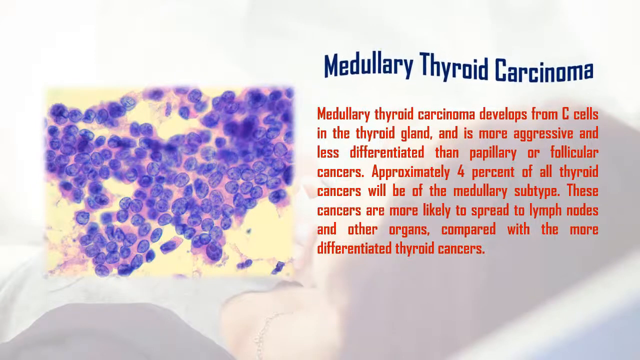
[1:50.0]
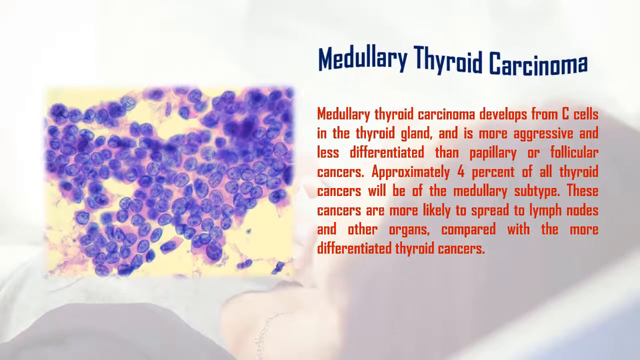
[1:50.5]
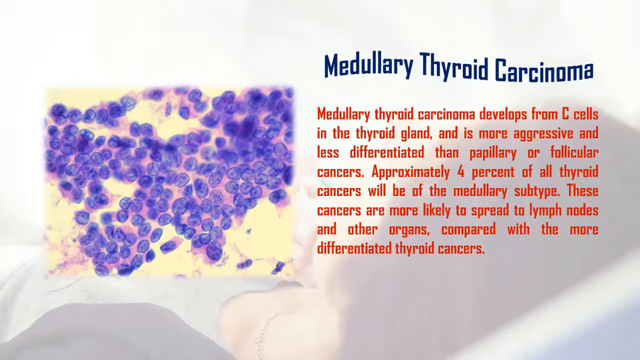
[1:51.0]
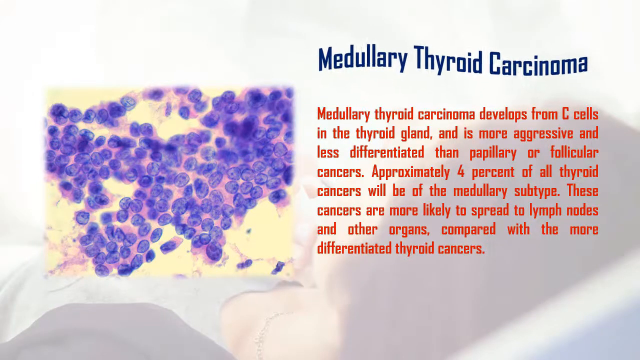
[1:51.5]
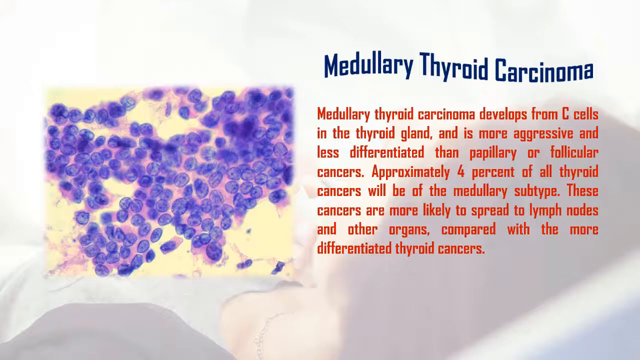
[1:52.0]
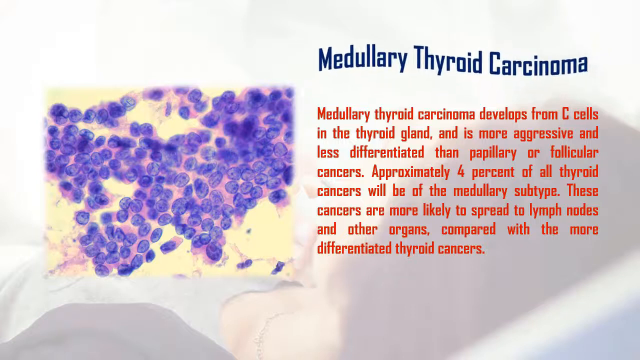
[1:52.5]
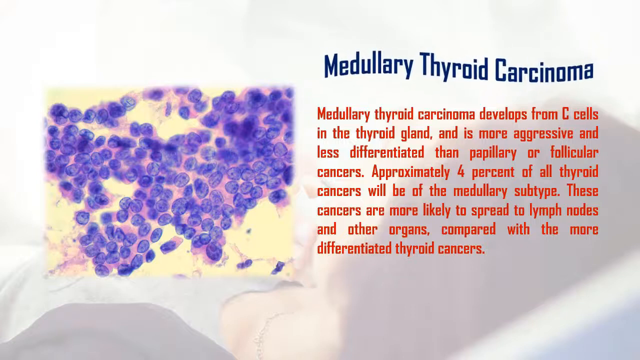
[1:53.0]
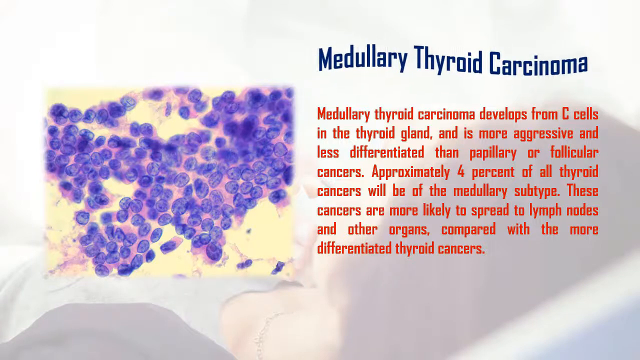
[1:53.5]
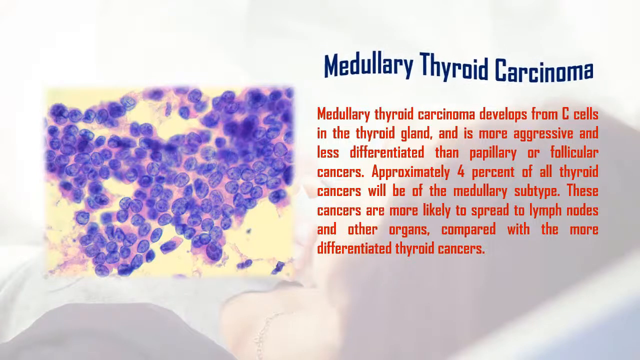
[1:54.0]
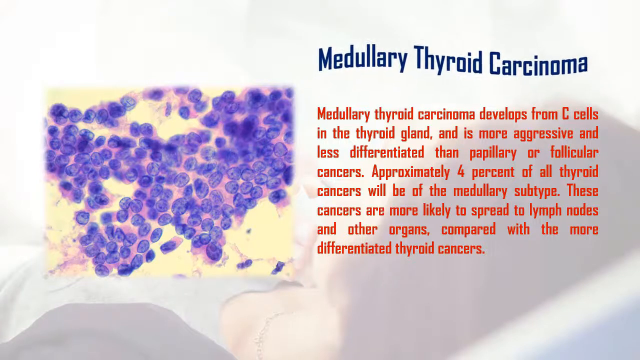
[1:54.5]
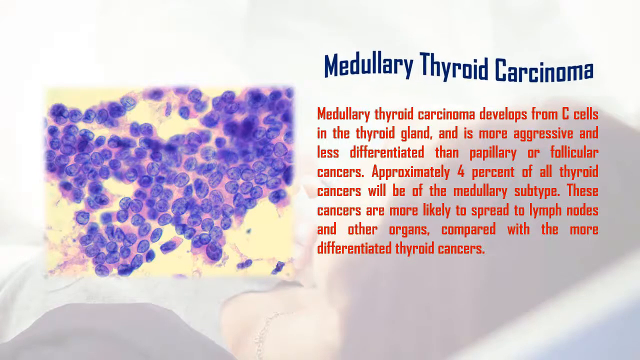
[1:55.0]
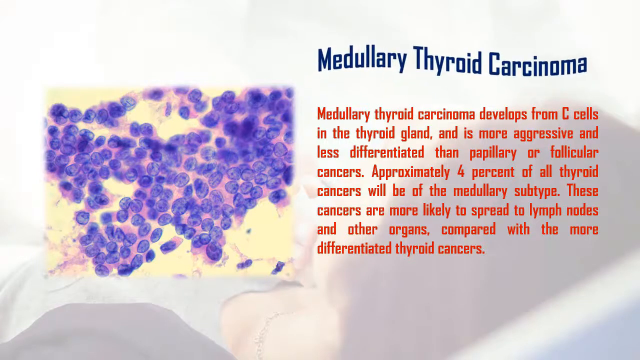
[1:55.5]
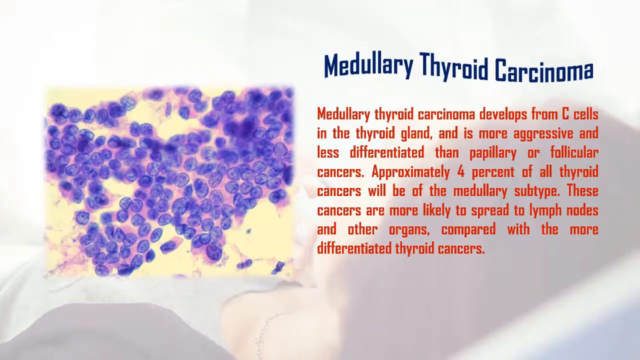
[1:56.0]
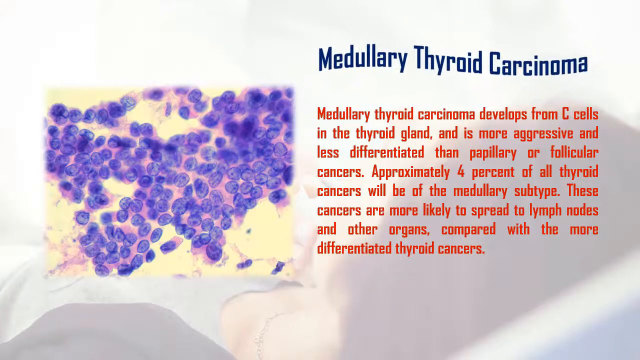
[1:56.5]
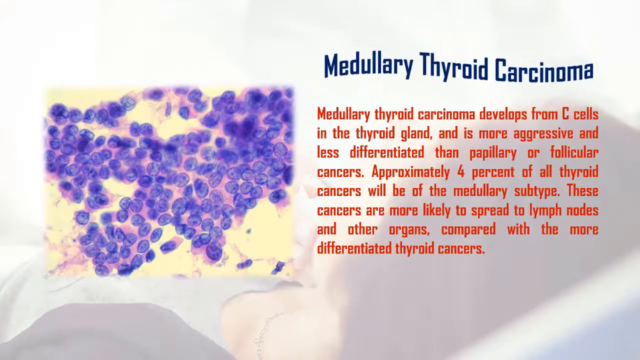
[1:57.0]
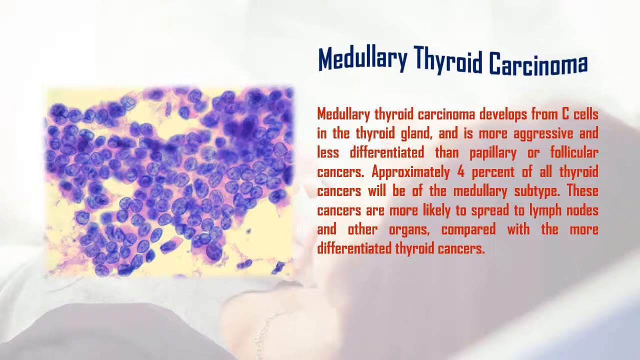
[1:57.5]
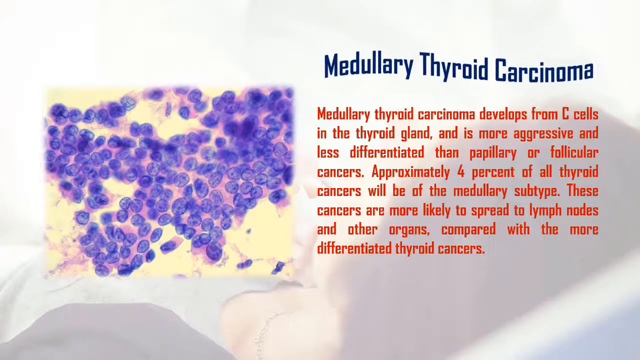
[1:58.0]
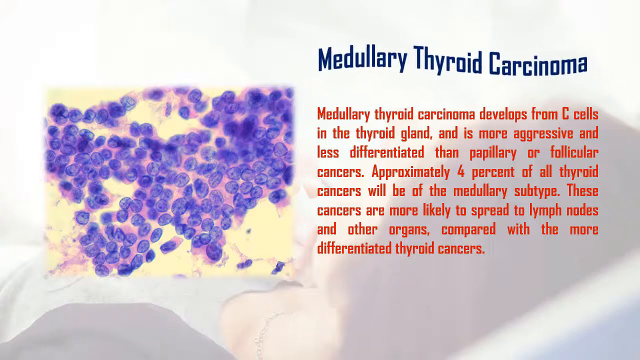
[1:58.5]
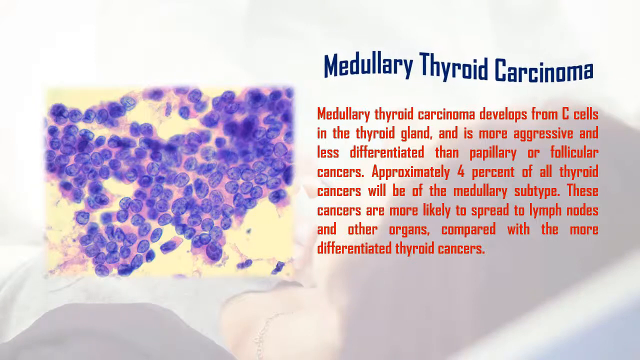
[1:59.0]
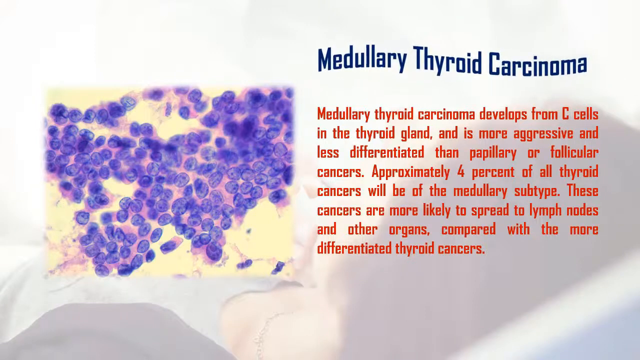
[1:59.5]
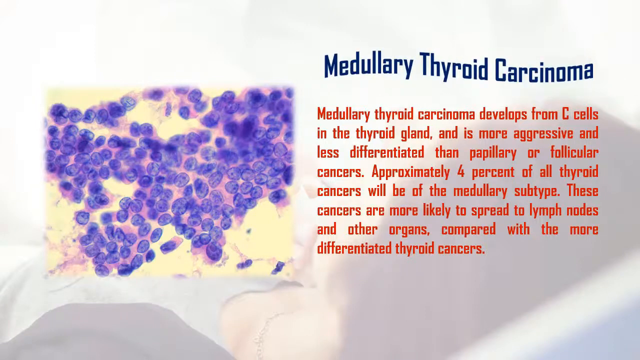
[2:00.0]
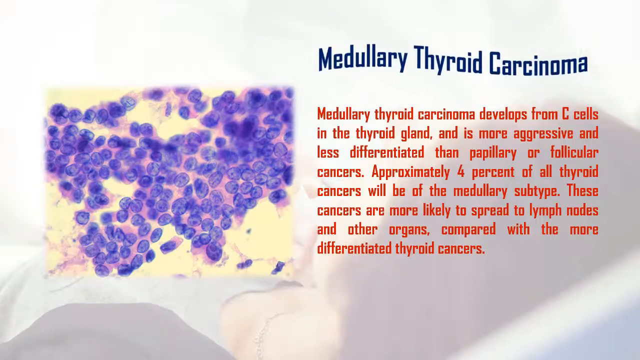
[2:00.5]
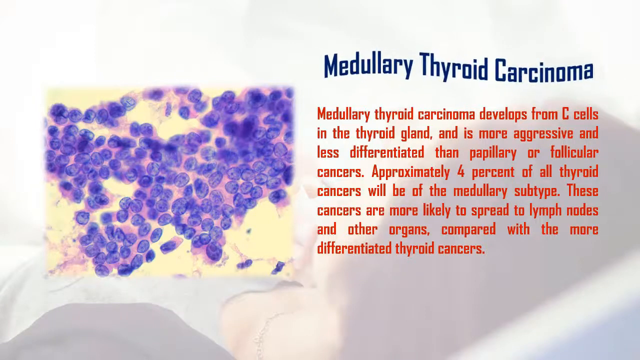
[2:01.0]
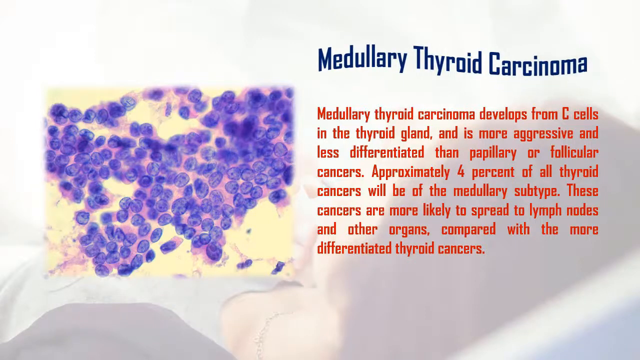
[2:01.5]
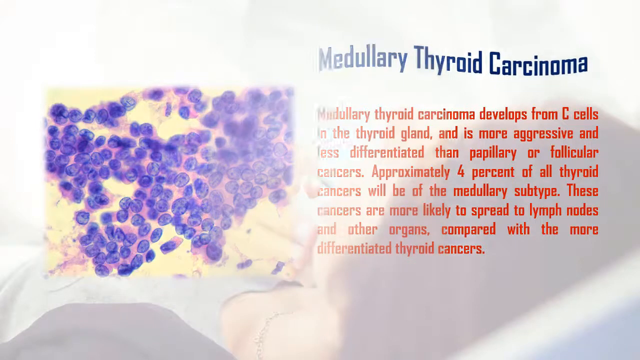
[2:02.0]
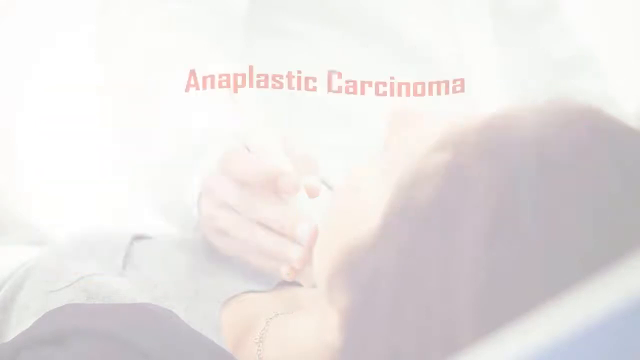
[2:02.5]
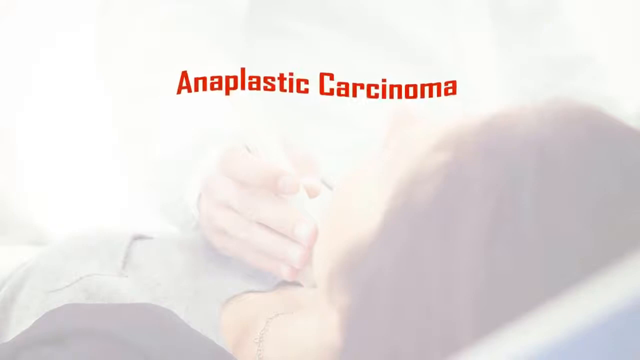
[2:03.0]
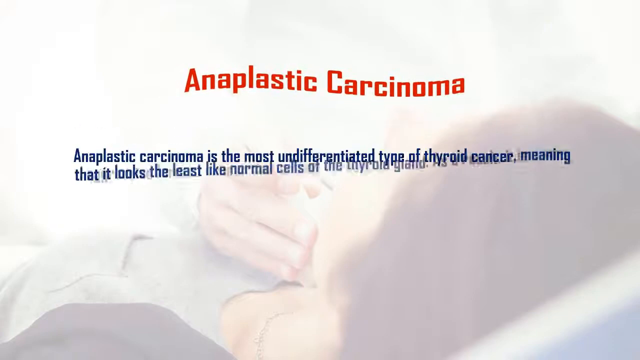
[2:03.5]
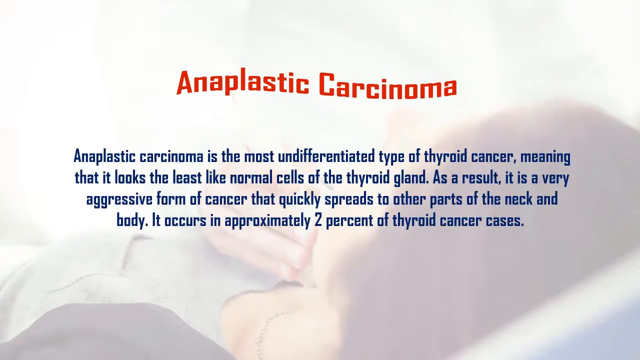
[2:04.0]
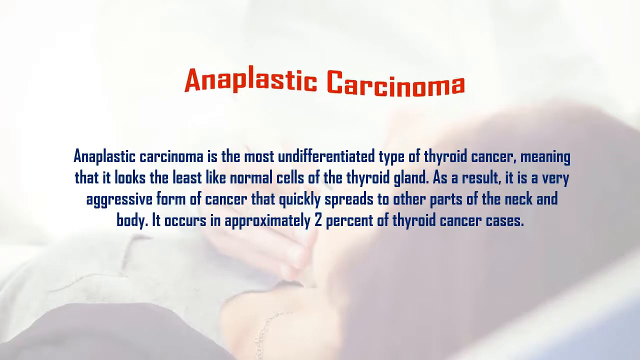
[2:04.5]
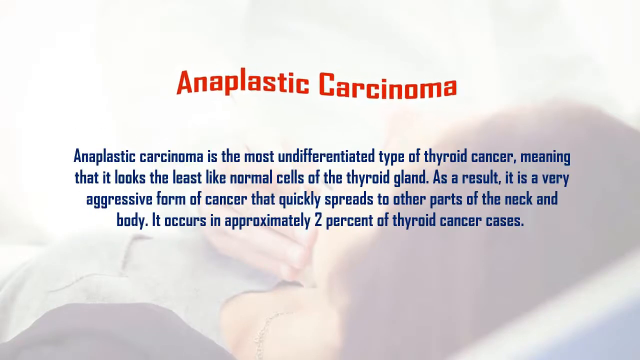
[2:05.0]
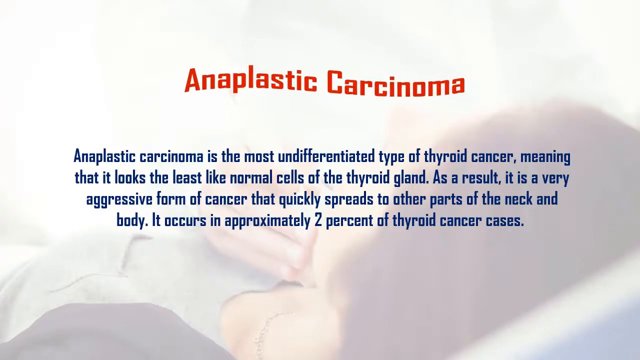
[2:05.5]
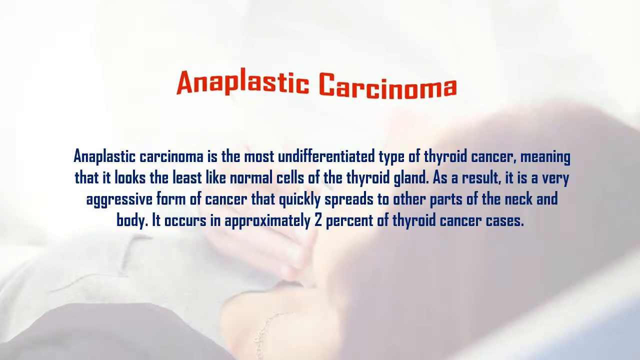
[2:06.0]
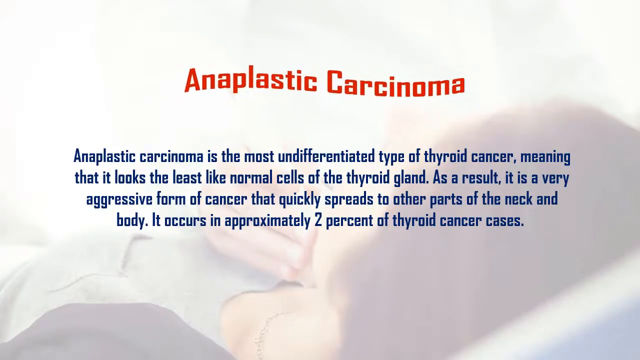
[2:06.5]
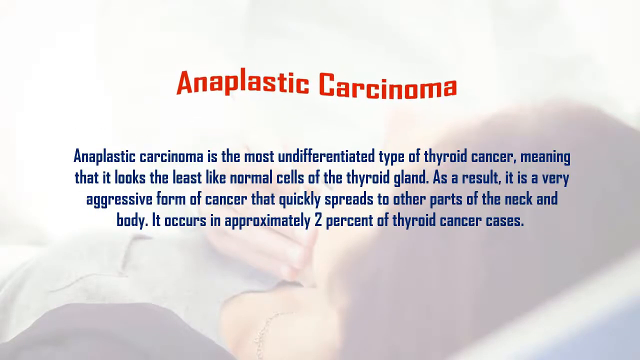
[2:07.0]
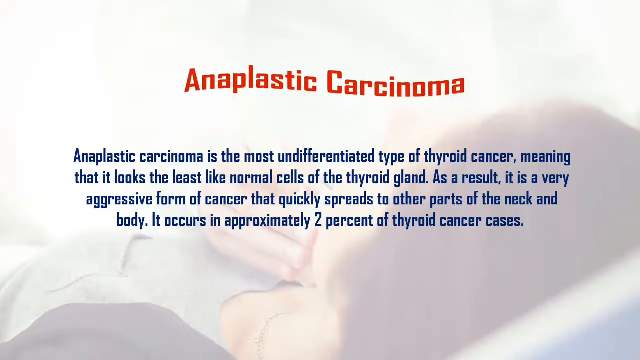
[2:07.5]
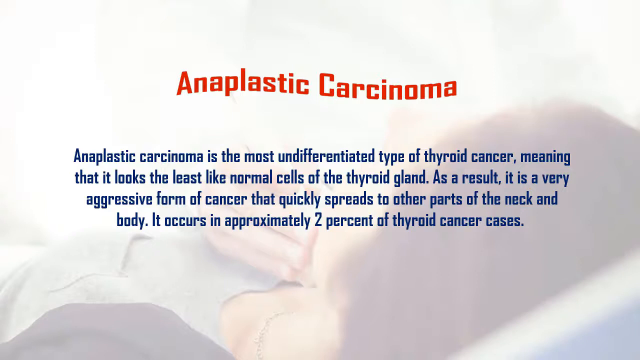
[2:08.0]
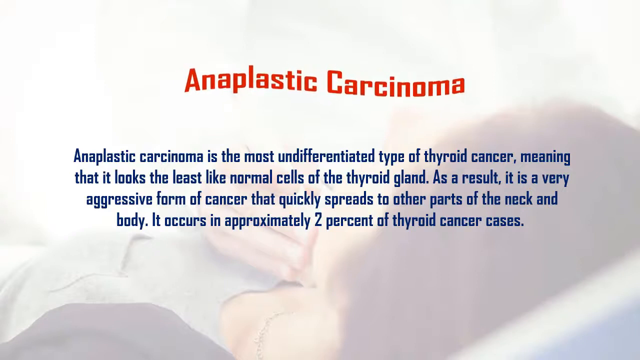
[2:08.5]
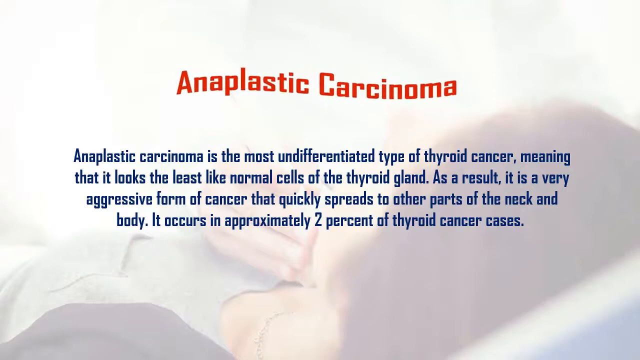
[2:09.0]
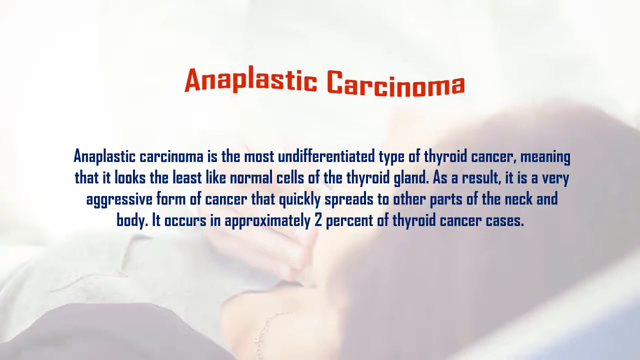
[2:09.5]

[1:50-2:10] In the background is a very muted image of a woman lying back on what looks like a hospital bed, seen from the side; only her dark hair and a pillow on the right can be made out. More prominent is a rectangular image on the left side of the screen showing an up-close view of cancer cells. On the right, the title "medullary thyroid carcinoma" is highlighted and rotates slightly clockwise. Below it, much smaller red text reads "Medullary thyroid carcinoma develops from c-cells in the thyroid gland and is more aggressive and less differentiated than papillary or follicular cancers. Approximately 4% of all thyroid cancers will be of the medullary subtype. These cancers are more likely to spread to lymph nodes and other organs compared with the more differentiated thyroid cancers."